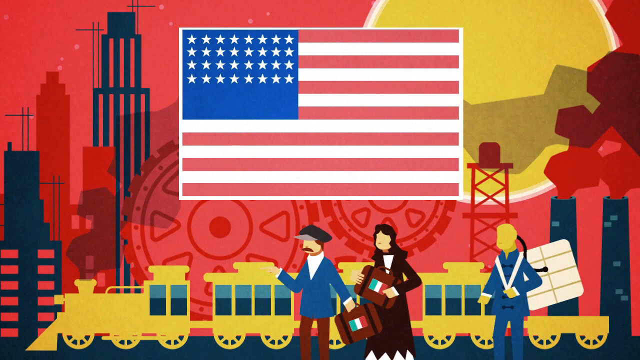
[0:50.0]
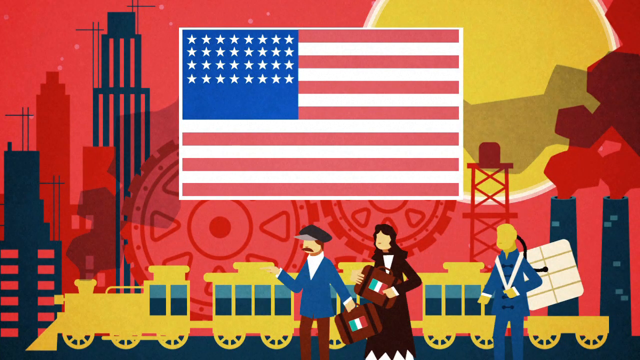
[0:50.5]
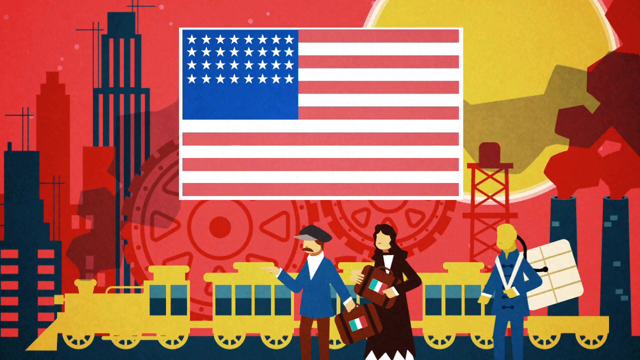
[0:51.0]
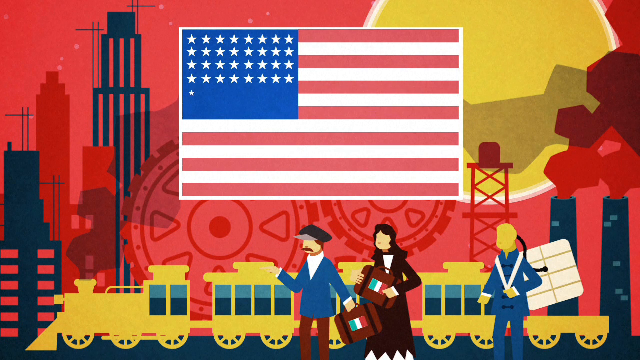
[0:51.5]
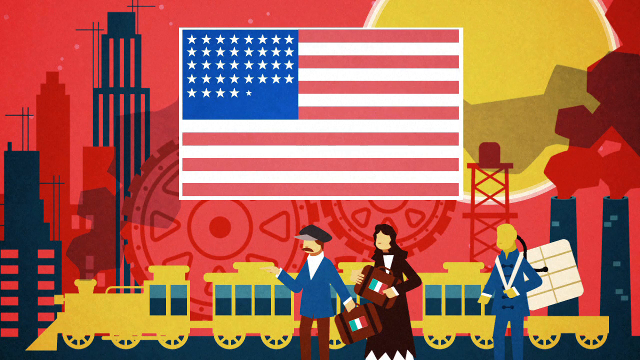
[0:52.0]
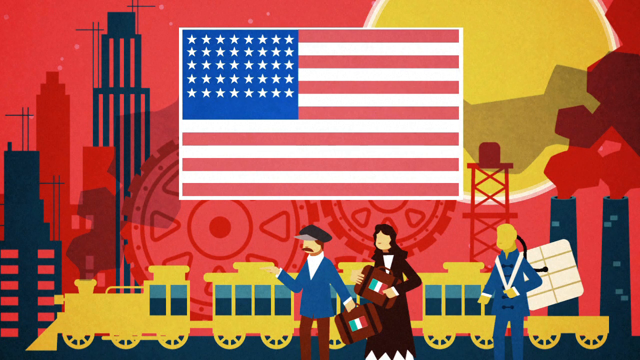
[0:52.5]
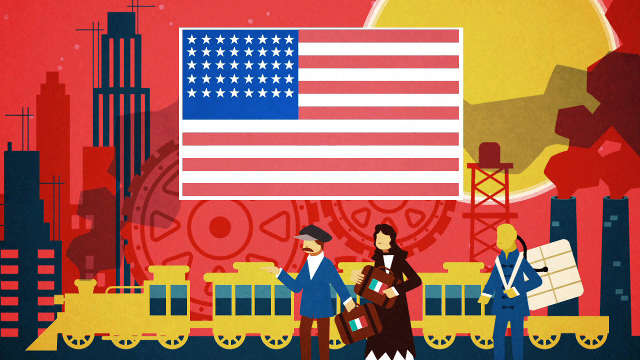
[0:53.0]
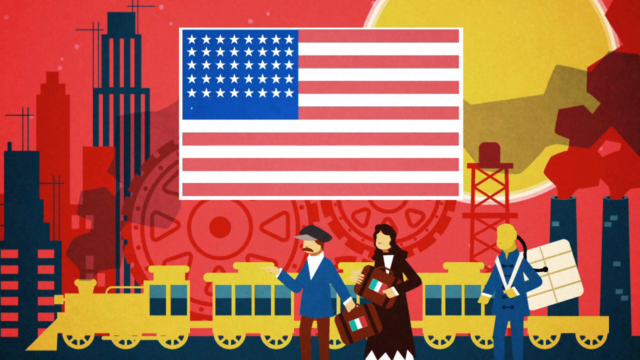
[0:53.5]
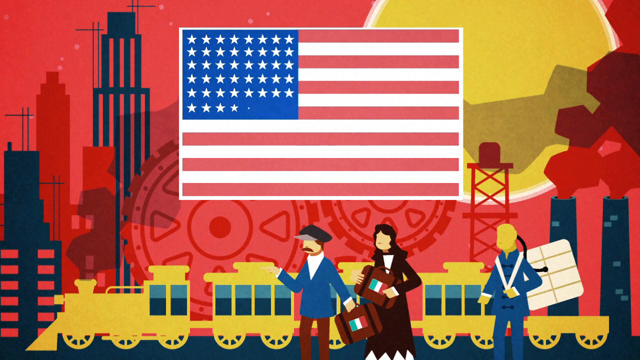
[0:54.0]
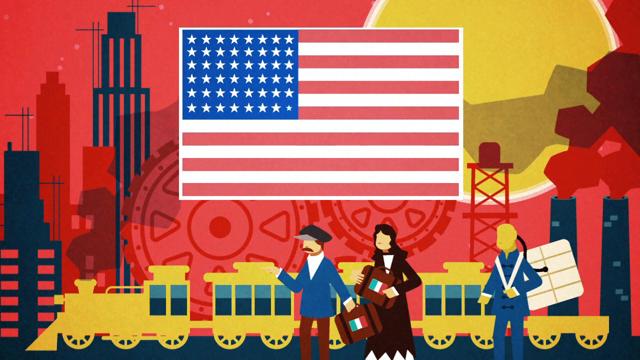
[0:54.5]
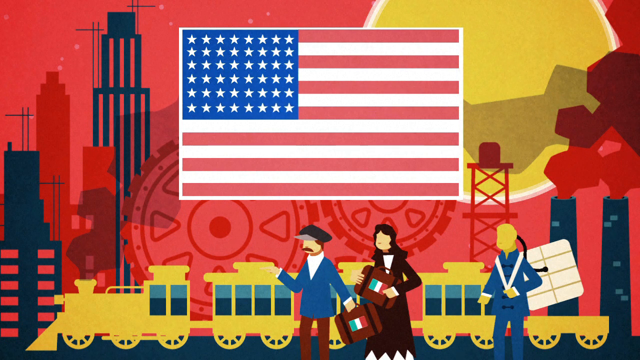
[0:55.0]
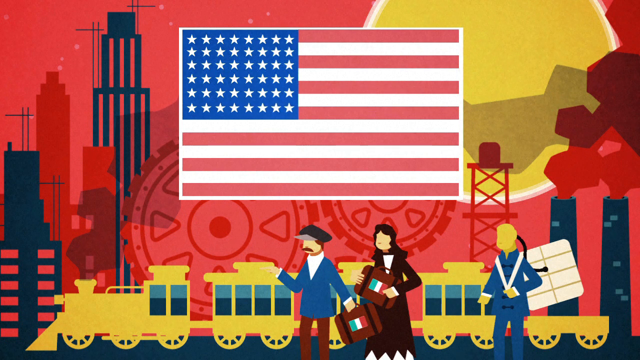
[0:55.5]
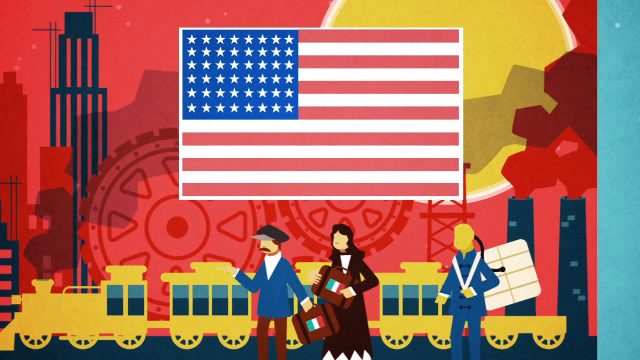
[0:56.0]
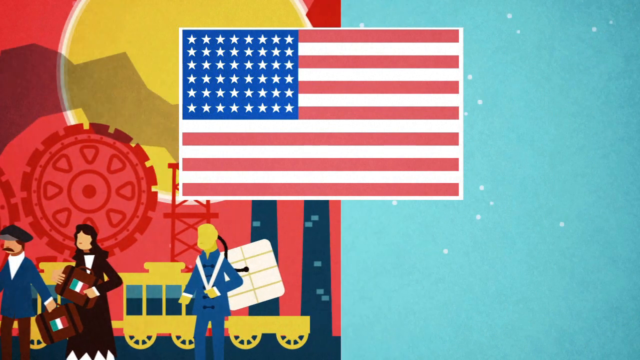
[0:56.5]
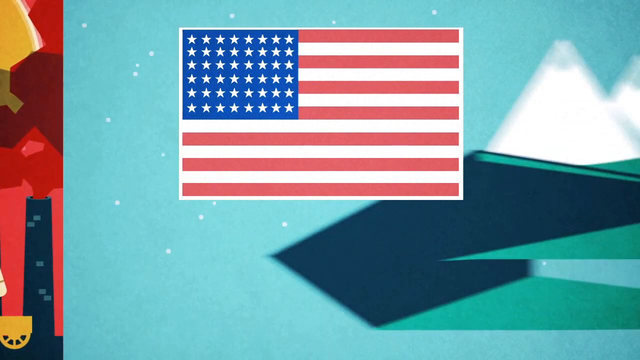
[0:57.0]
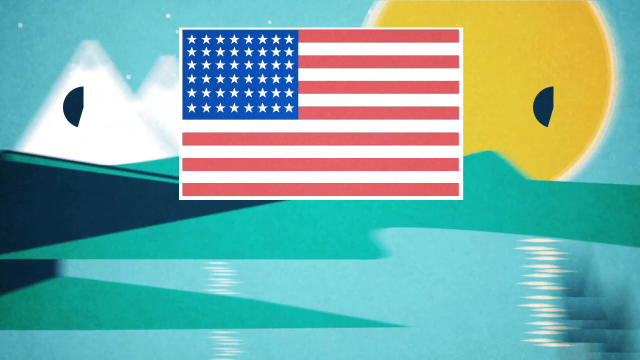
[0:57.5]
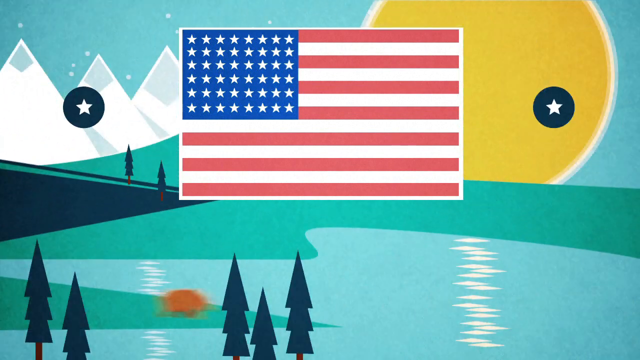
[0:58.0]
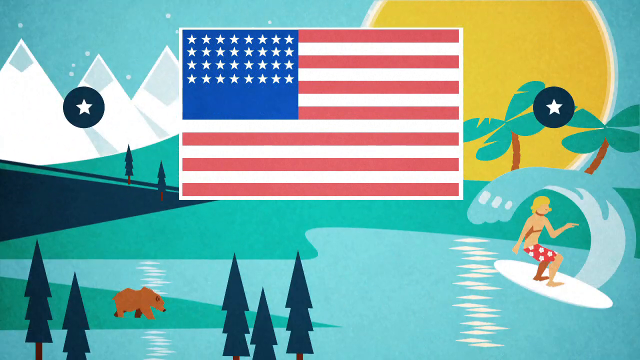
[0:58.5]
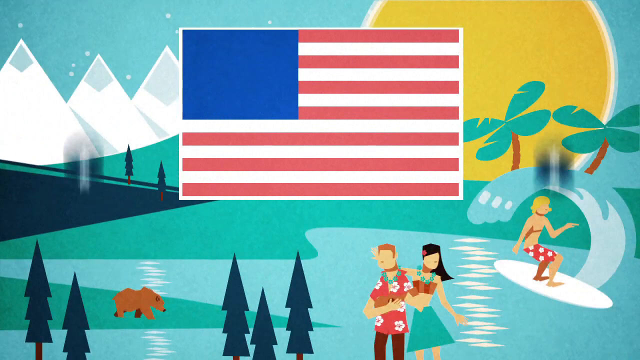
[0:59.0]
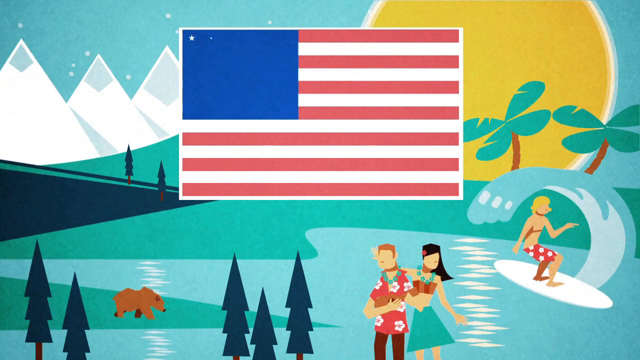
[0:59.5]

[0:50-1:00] The colorful graphical animation, in red, yellow, blue and black, transitions rapidly between different items on the screen. A large American flag stays in position right in the middle of the screen while its stars and stripes change according to the events depicted at the bottom of the screen. What seems to be the outline of skyscrapers appears, along with people in clothing that looks like modern-day clothing. The flag now has 50 stars. The scene then transitions to what looks like a beach scene: on the right, a surfer on a surfboard wears red and white polka-dotted shorts and might be a man. A large sun is on the right side, and tall triangular mountain peaks are on the left.